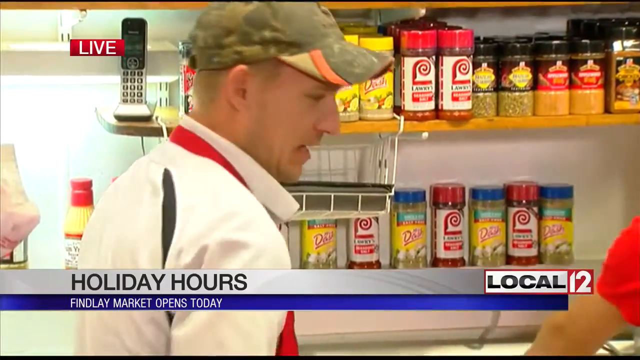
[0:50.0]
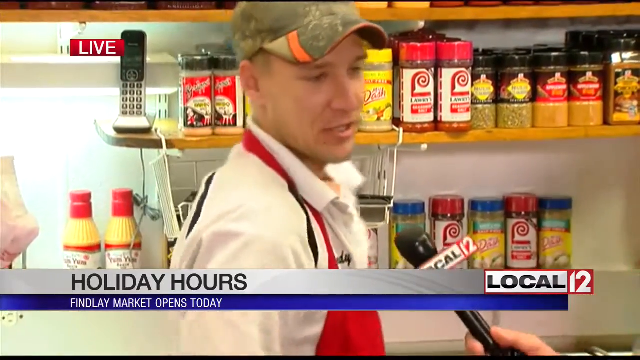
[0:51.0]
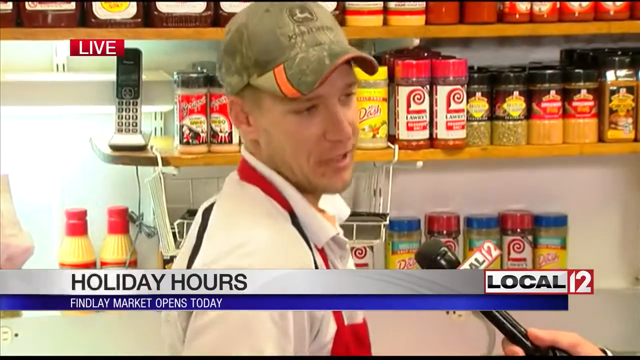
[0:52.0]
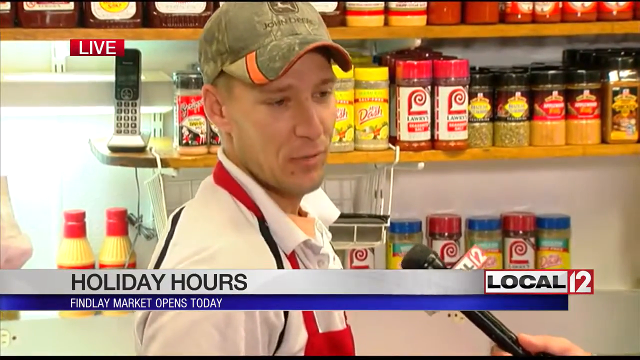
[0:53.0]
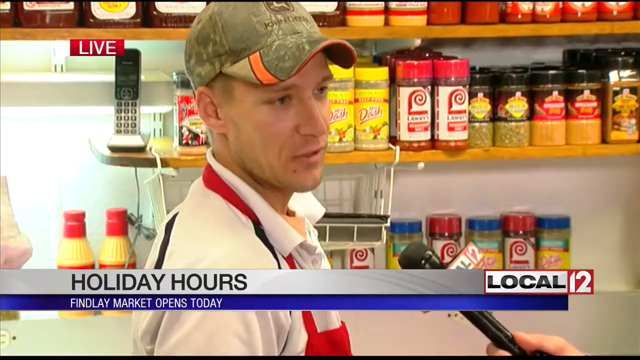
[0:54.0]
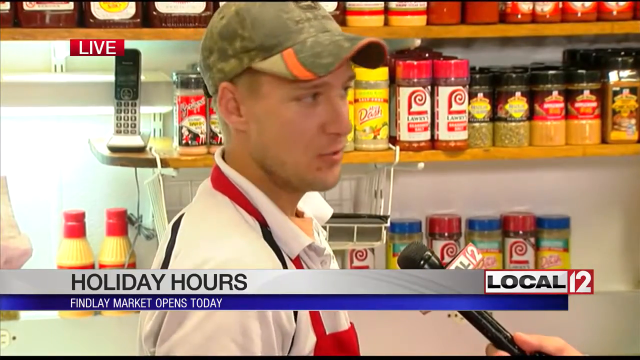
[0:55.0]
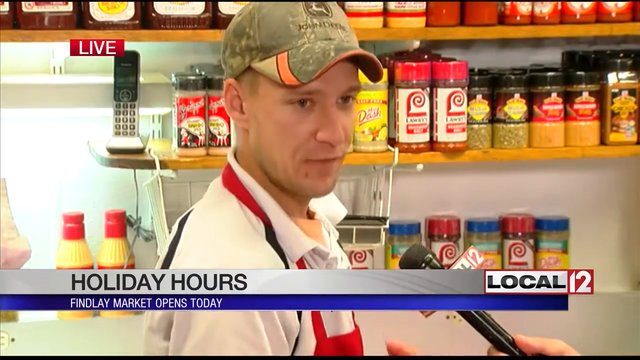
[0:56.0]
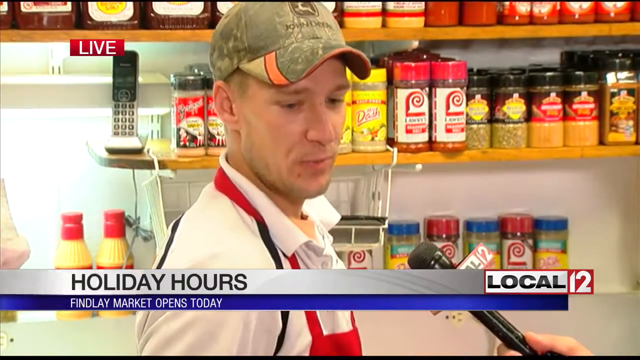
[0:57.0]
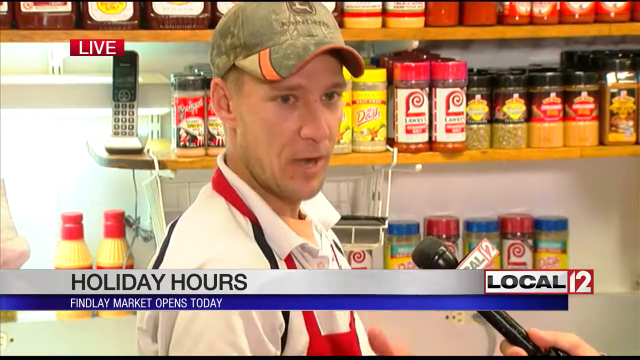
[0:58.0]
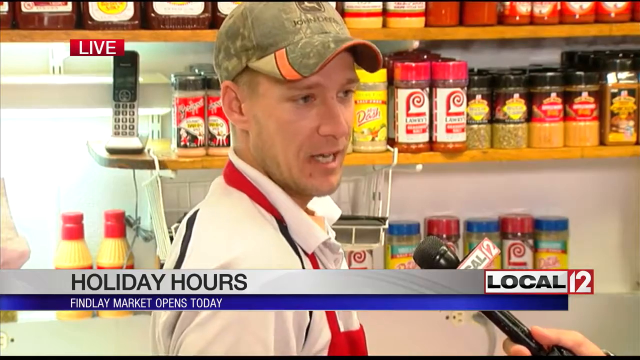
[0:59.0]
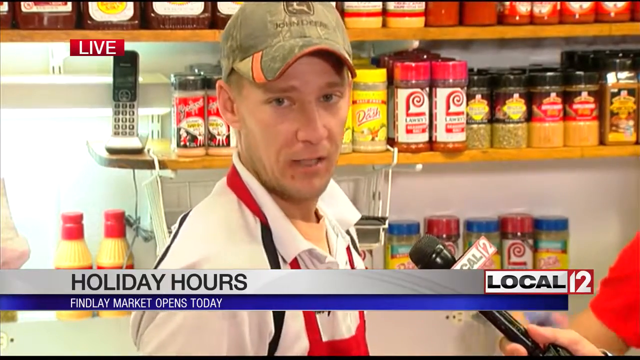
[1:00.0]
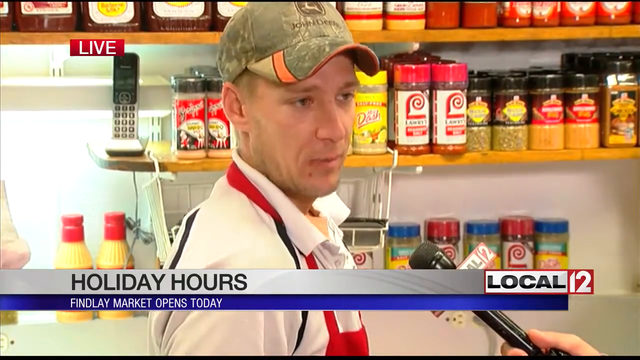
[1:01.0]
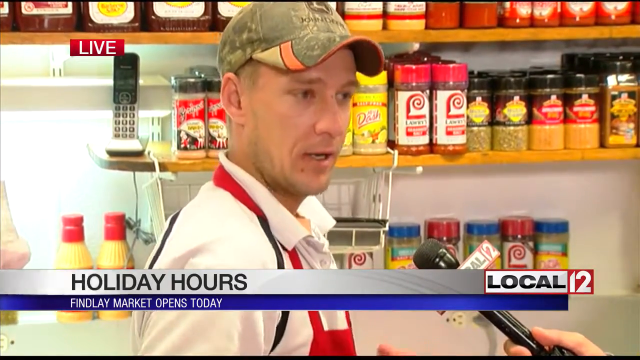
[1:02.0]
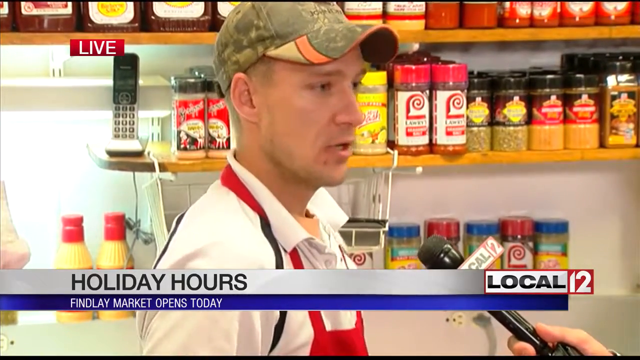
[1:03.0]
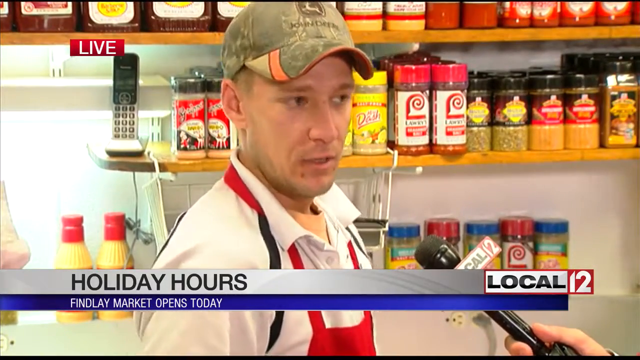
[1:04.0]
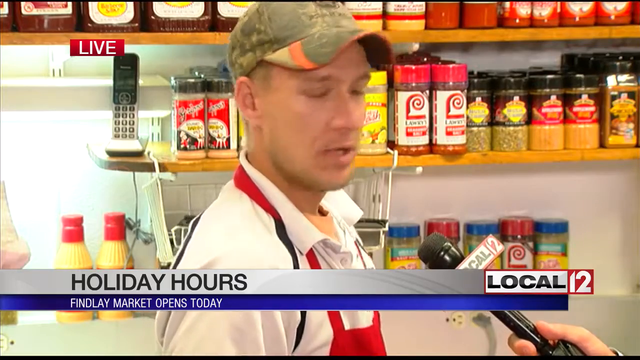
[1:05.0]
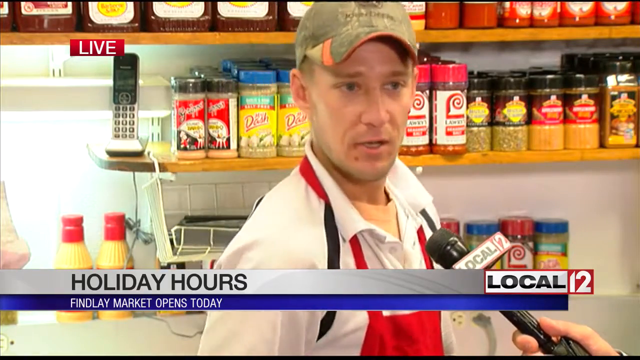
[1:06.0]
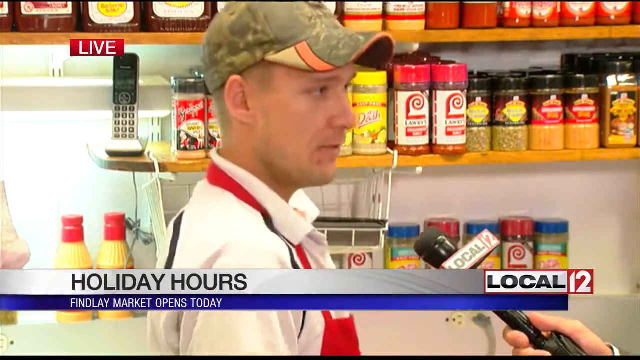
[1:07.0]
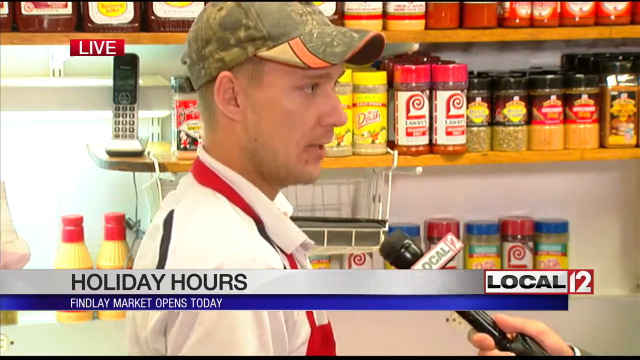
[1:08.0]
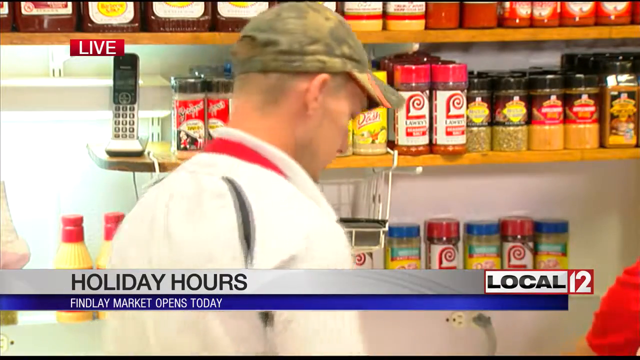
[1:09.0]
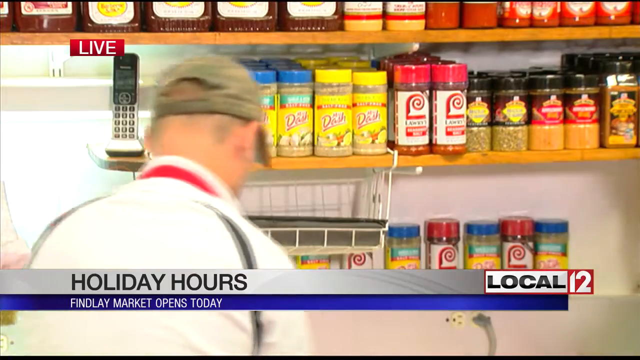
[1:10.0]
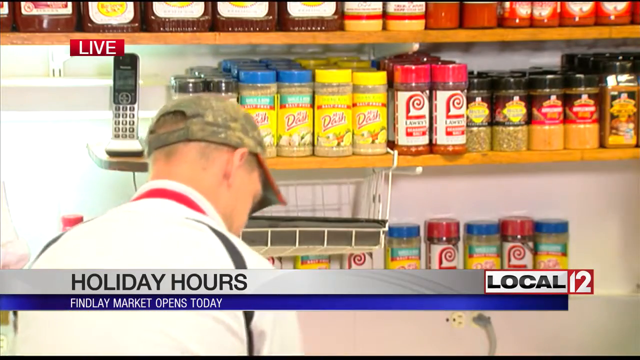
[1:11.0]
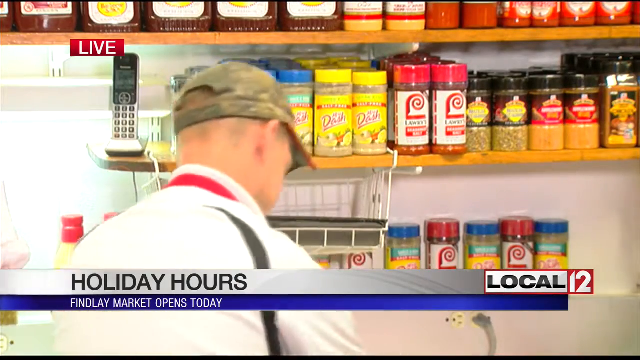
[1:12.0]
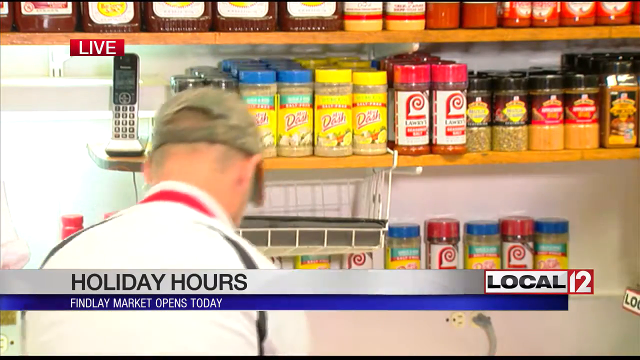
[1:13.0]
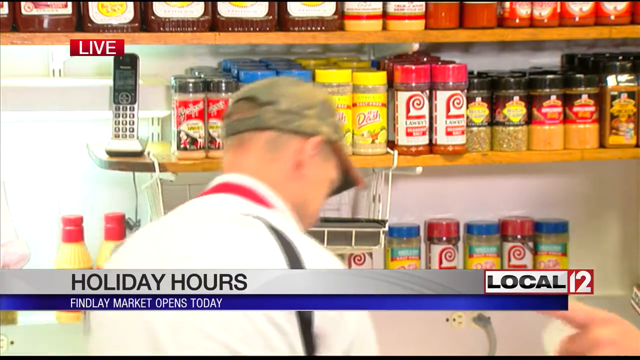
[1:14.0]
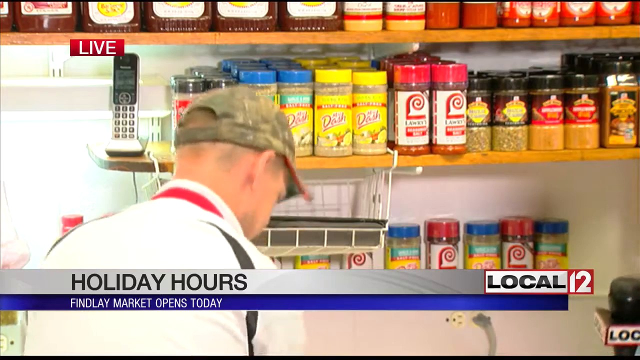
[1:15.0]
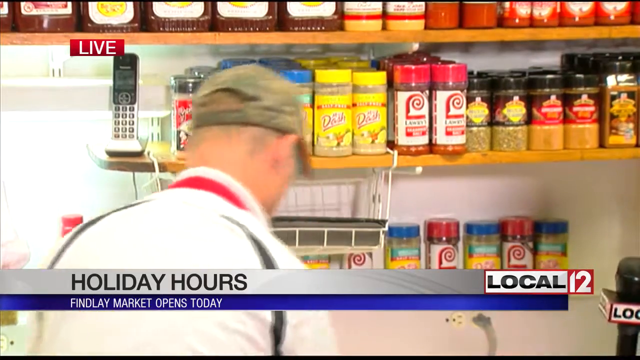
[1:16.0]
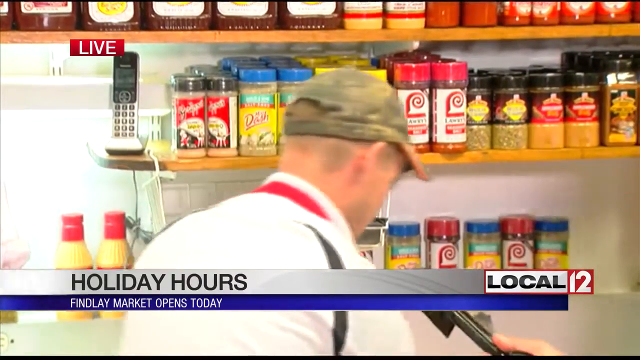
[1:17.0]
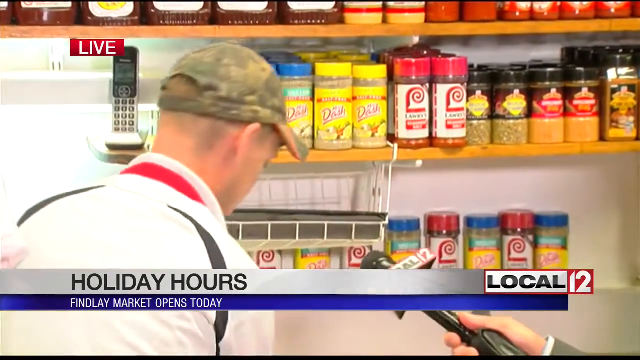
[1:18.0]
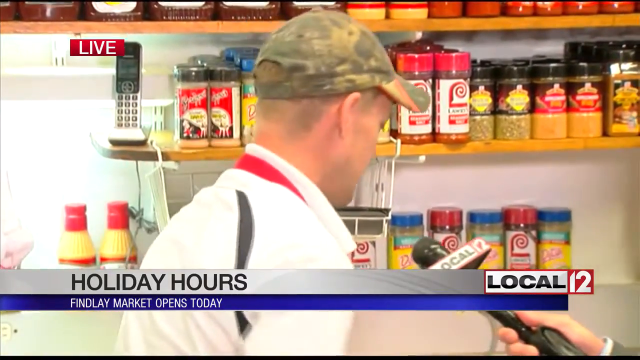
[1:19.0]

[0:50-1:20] The deli worker in the green hat turns to the right and speaks into the news anchor's microphone. He gestures while explaining something, with his hands, palms and fingers facing toward himself, possibly referring to himself. He looks to the right and back at the anchor, stops speaking, and starts moving meat from the right to the left. Meanwhile the anchor turns the microphone toward himself and speaks into it, most likely asking a question, then holds the microphone back to the worker, who keeps talking as he works. On the shelf in front of the worker are spices for cooking and seasoning meat, and above them are jars of barbecue sauce and other sauces for meat.